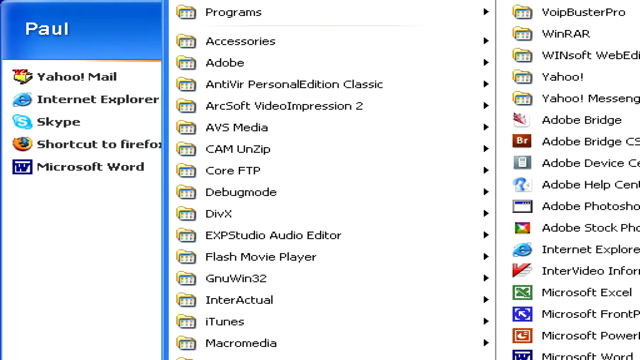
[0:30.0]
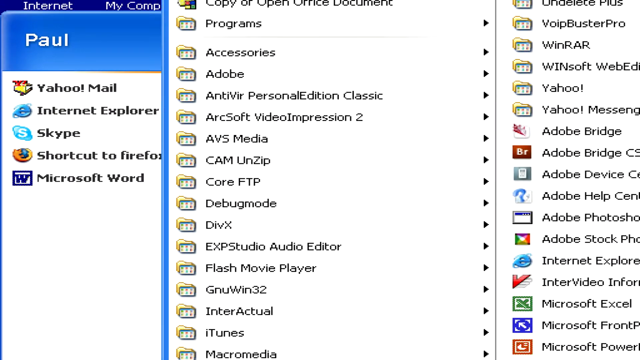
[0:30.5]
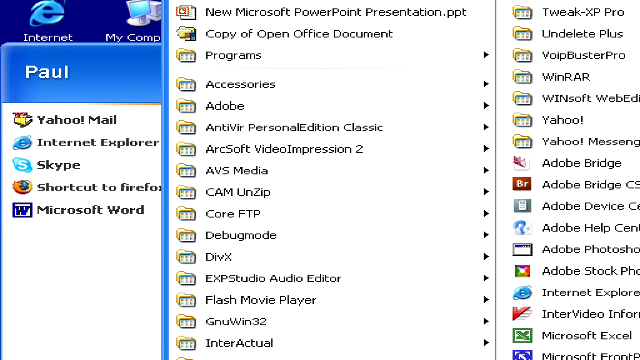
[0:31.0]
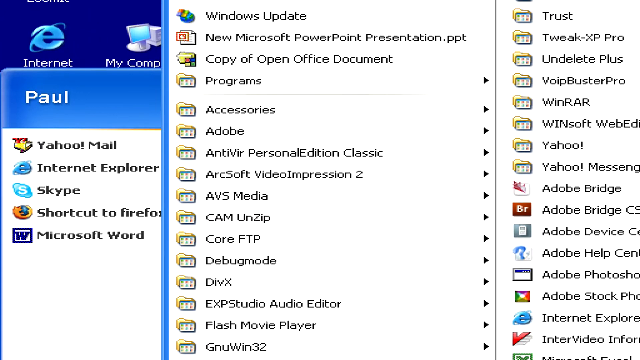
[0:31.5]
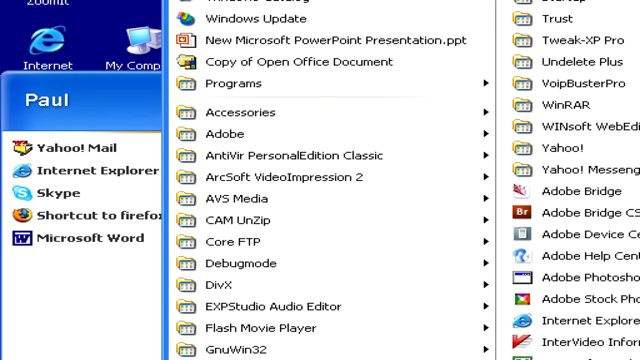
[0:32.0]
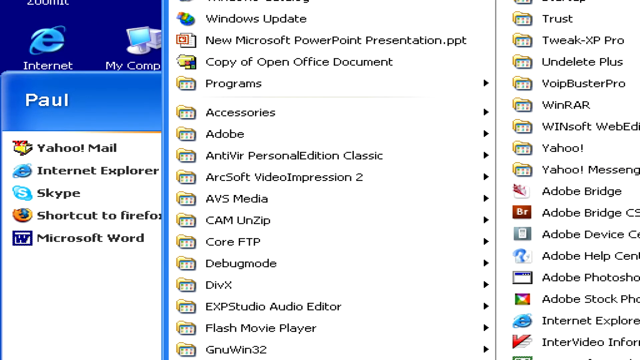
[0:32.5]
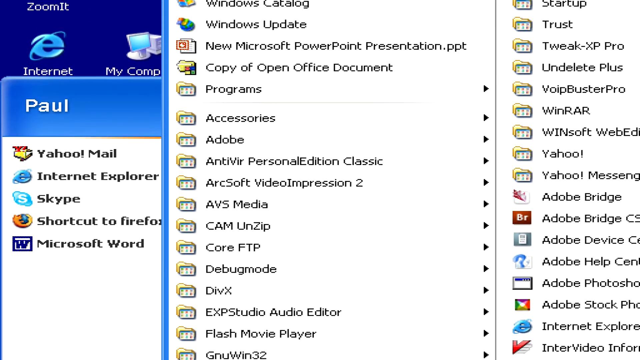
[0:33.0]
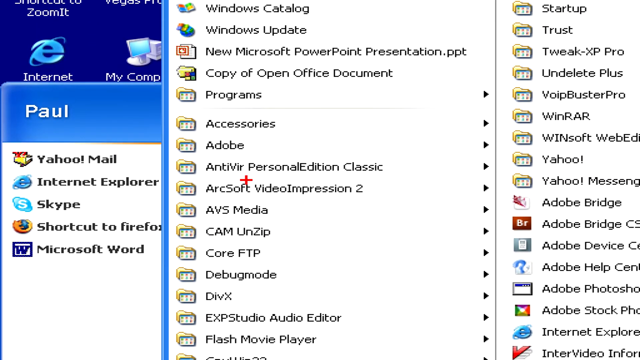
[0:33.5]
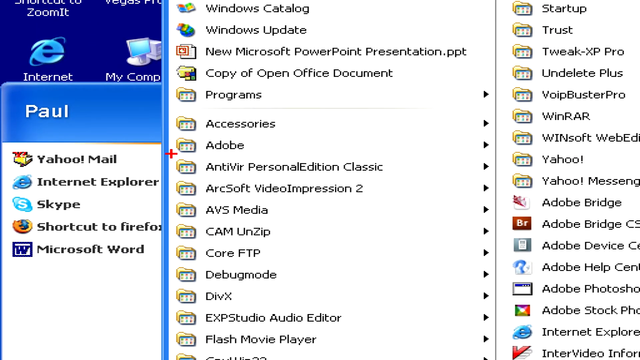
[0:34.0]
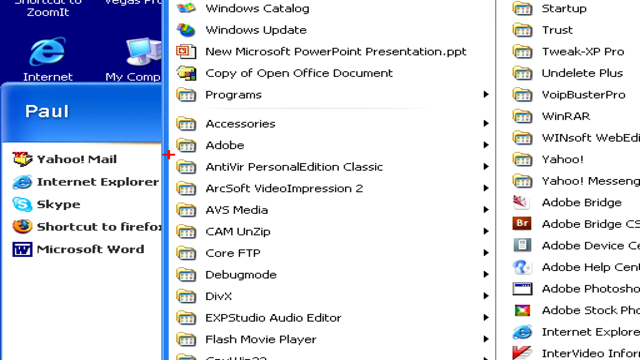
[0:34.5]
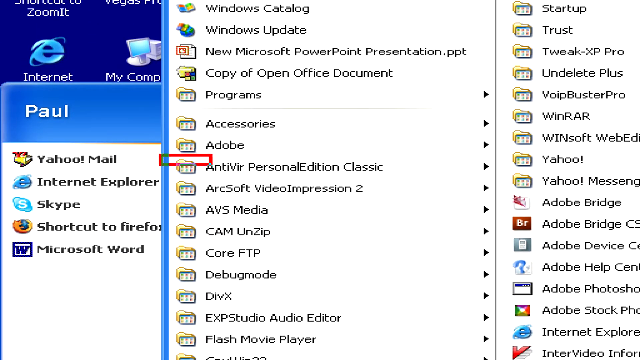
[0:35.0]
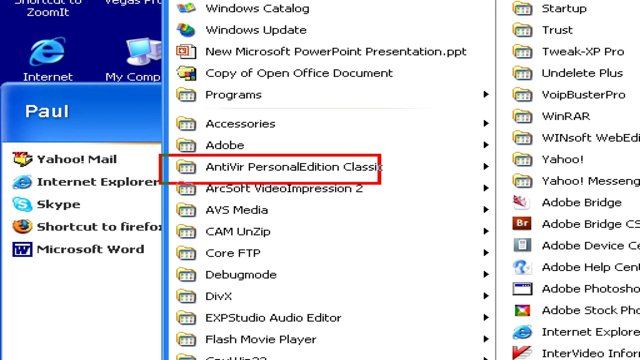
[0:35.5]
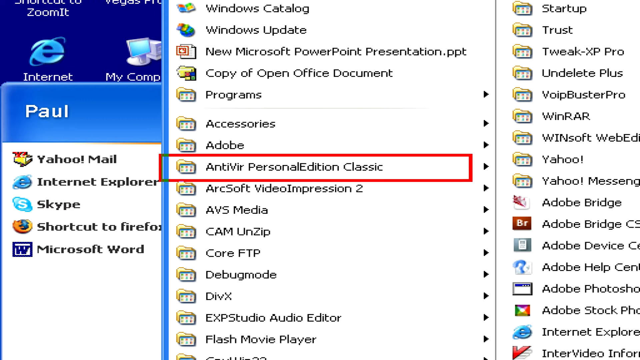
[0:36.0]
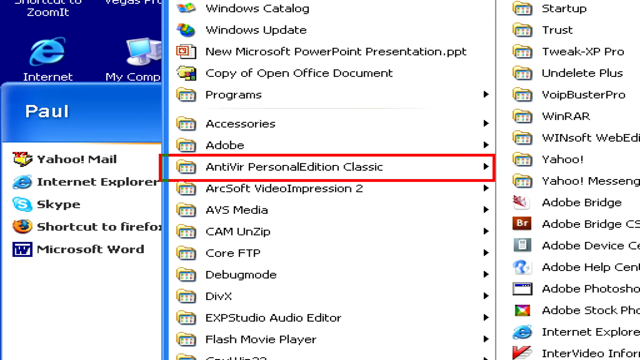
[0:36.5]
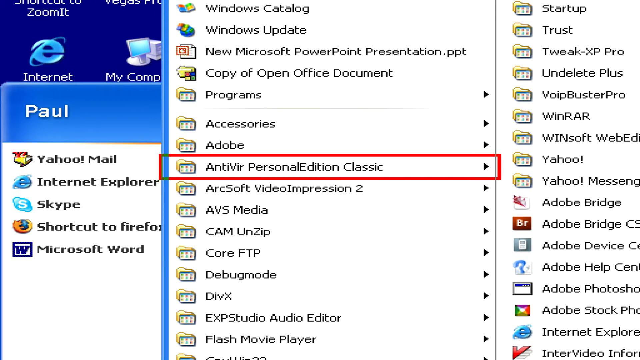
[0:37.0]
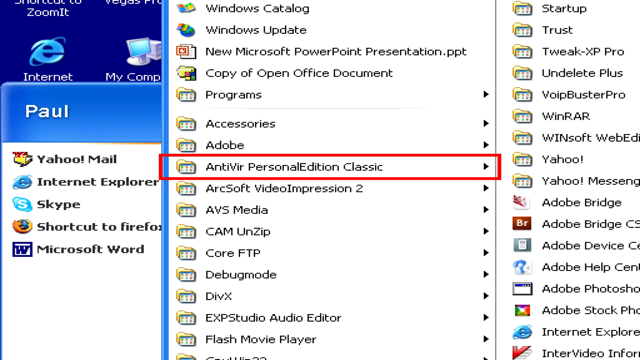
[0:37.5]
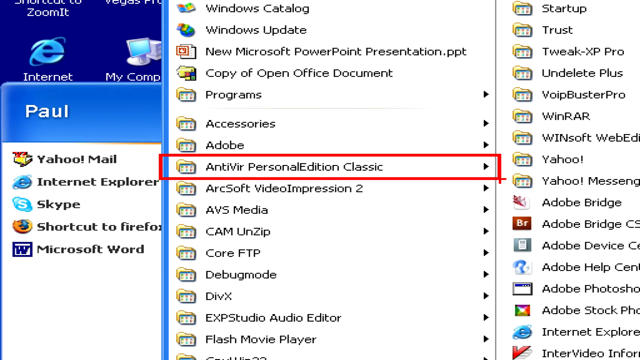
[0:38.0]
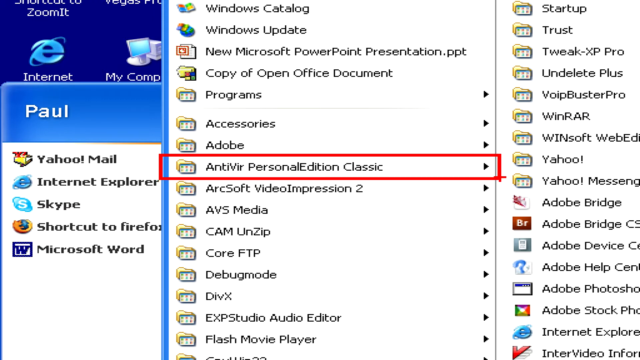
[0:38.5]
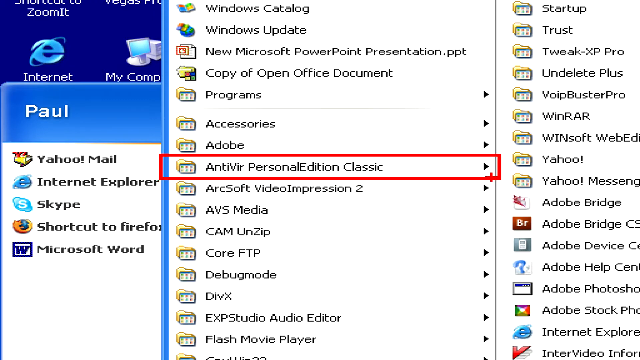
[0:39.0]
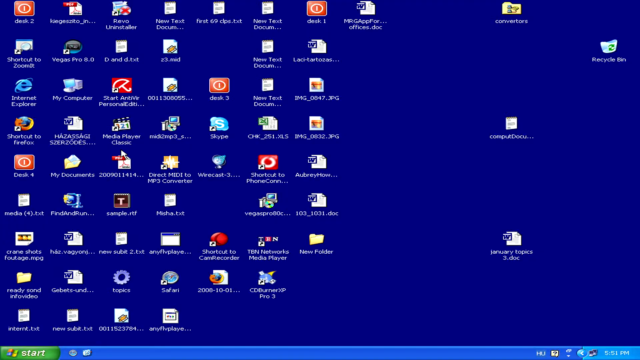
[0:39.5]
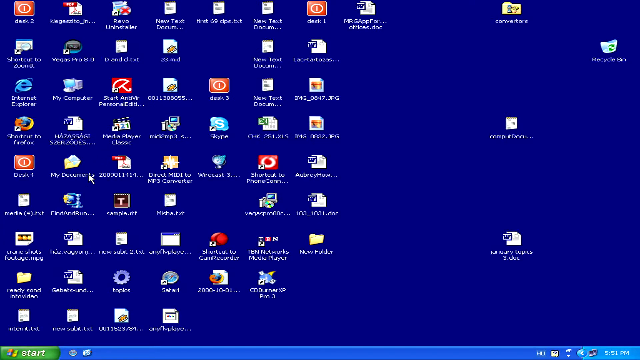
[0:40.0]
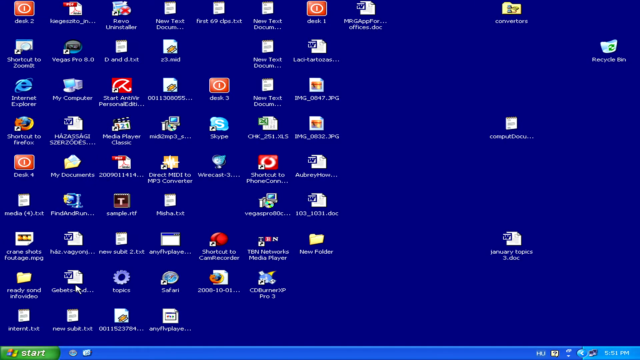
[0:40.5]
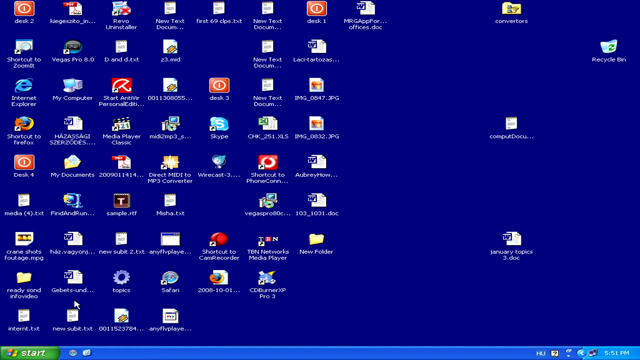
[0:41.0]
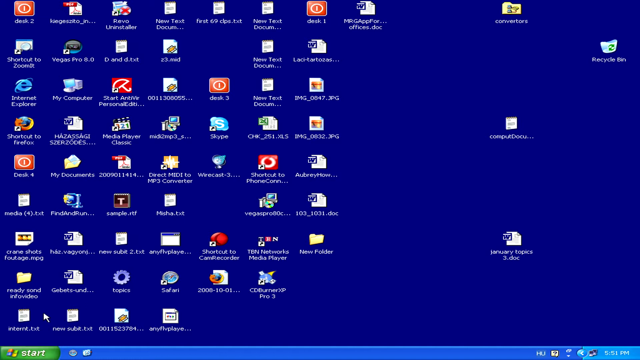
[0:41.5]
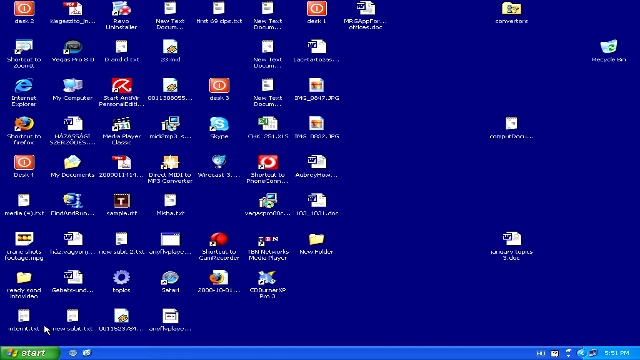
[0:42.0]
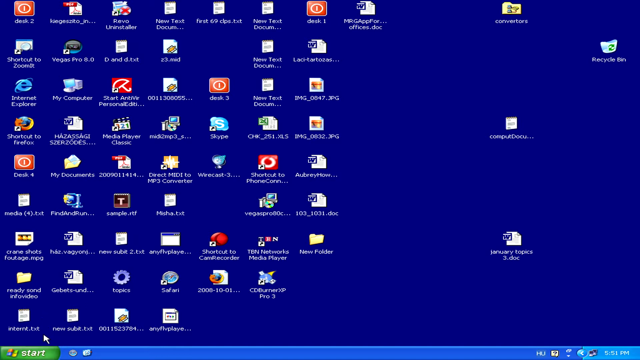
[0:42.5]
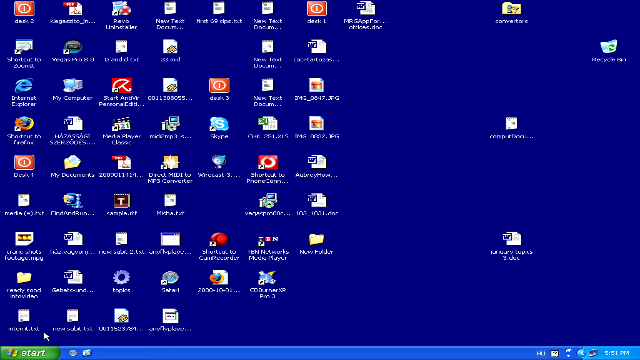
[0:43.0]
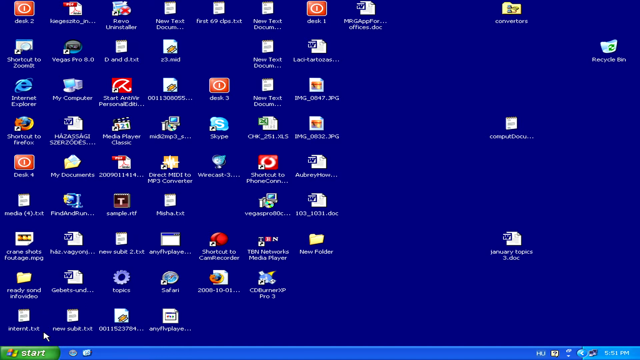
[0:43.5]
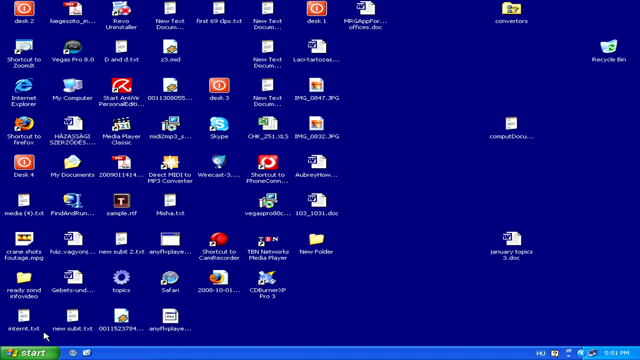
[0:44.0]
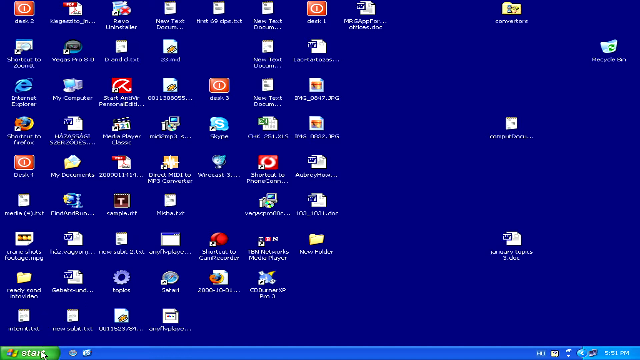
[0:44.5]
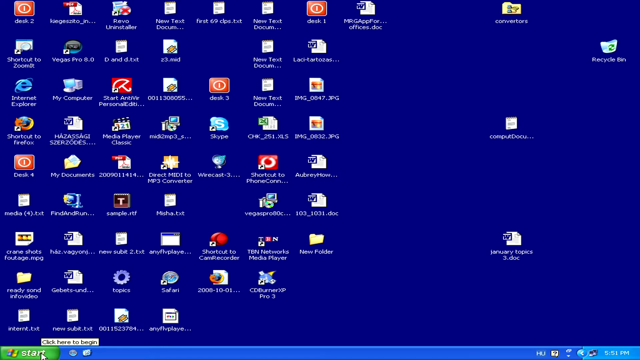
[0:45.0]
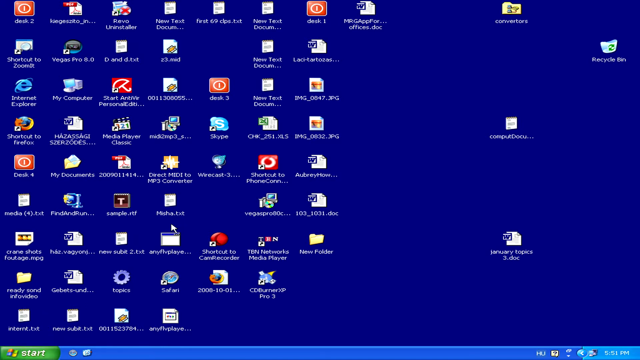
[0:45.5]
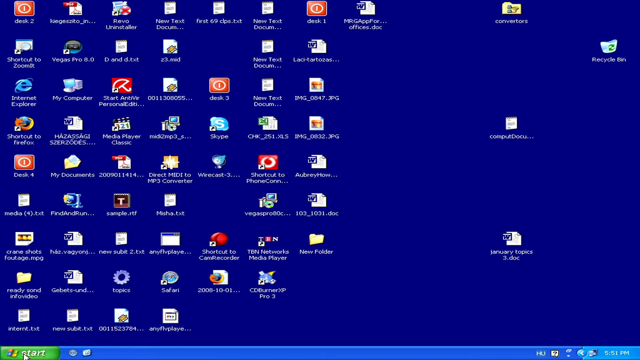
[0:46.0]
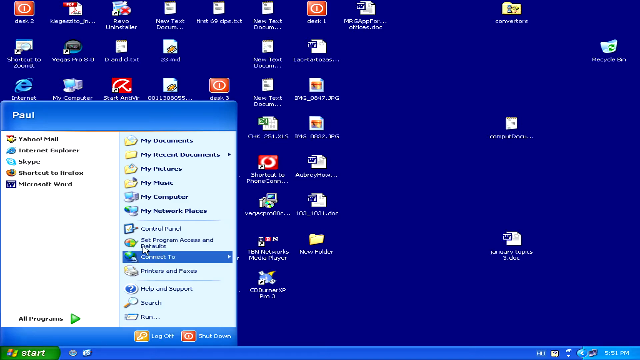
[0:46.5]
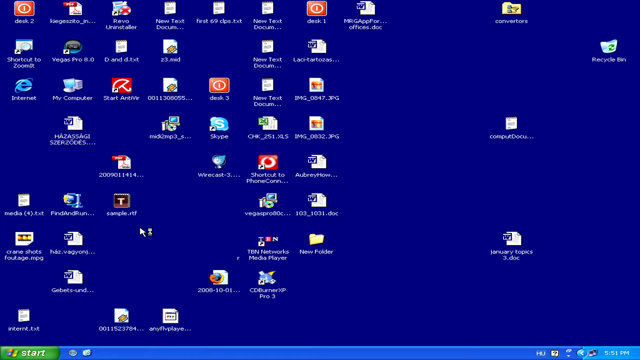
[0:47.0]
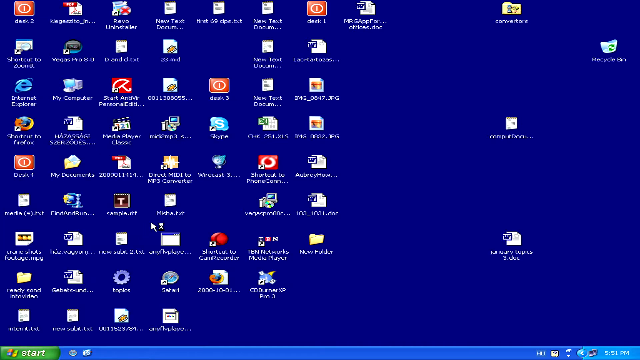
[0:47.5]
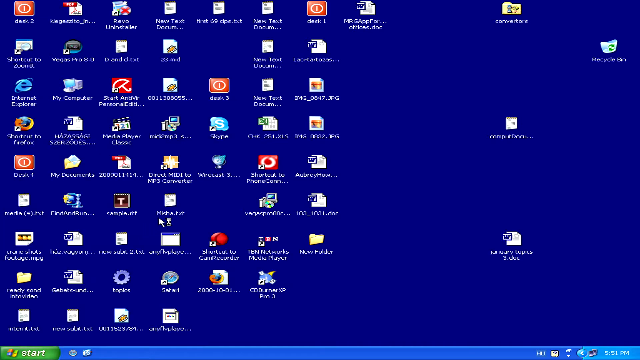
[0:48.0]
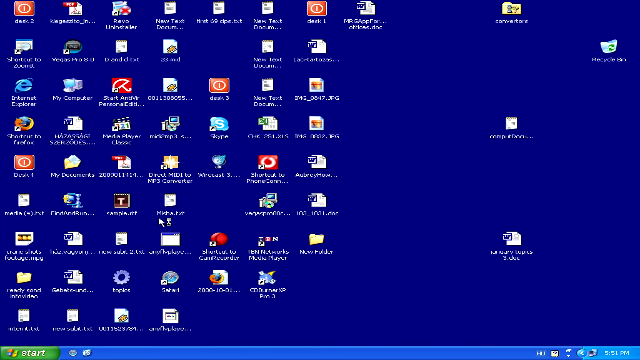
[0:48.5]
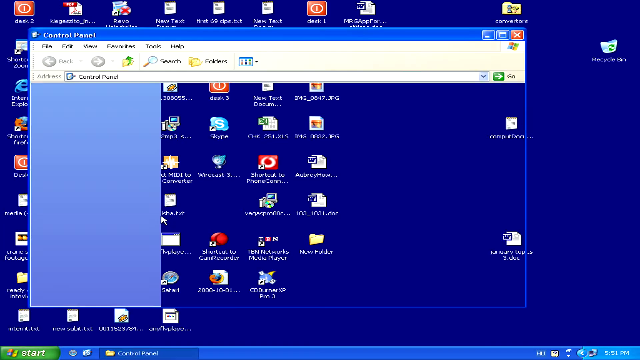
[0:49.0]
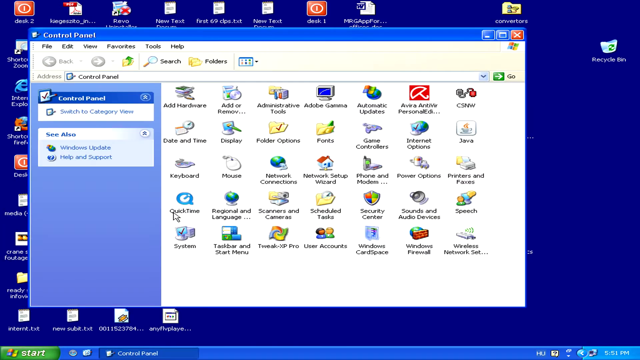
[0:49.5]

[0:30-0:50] The desktop shows Yahoo Mail, Internet Explorer, Skype, AVS Media, Adobe Bridge, and Microsoft Excel. The desktop belongs to someone named Paul, possibly the young man seen at the beginning. A personalized classic version of something is demonstrated on screen.